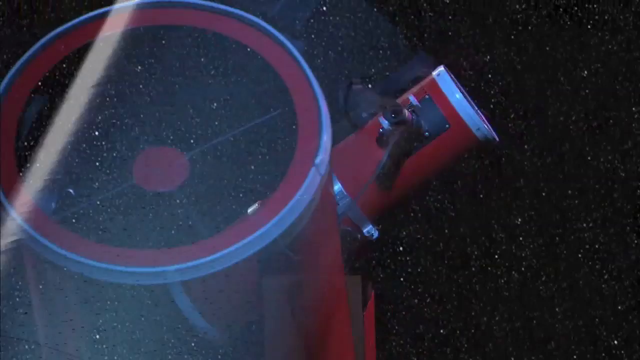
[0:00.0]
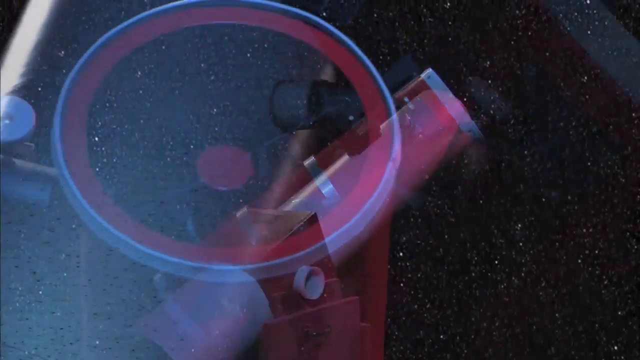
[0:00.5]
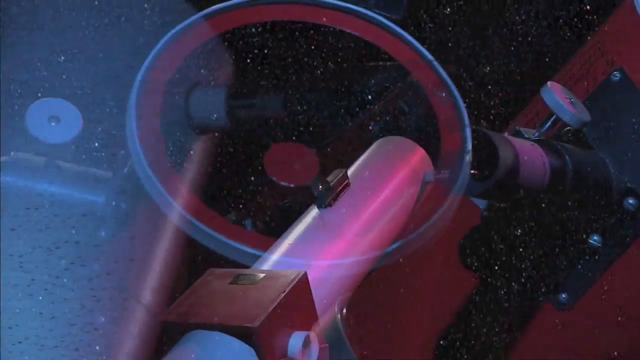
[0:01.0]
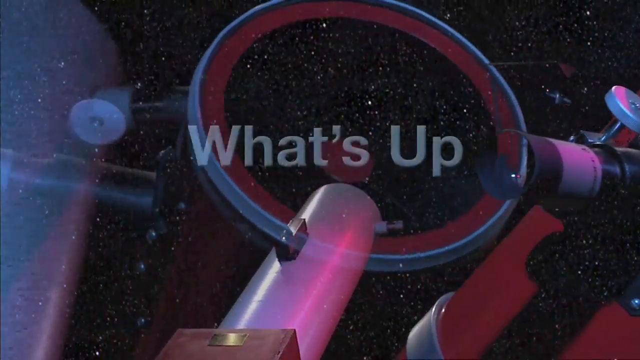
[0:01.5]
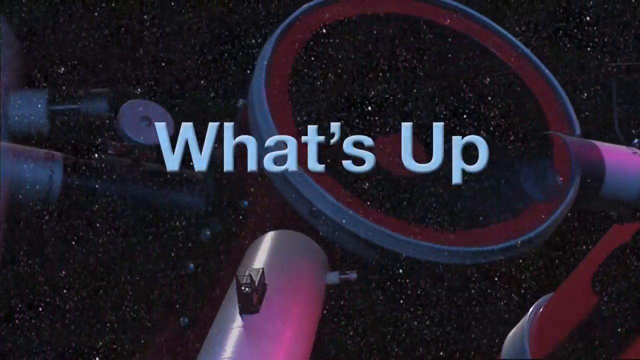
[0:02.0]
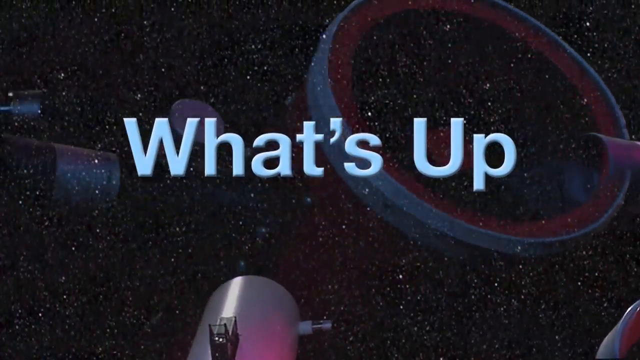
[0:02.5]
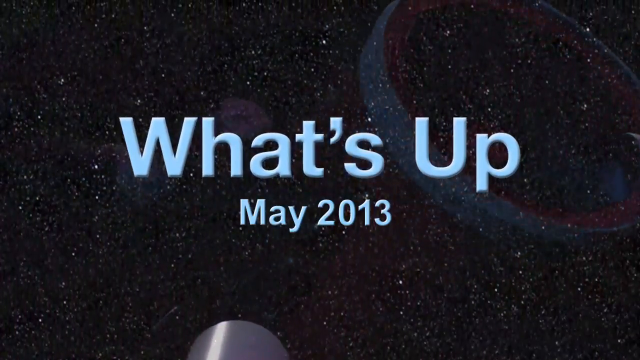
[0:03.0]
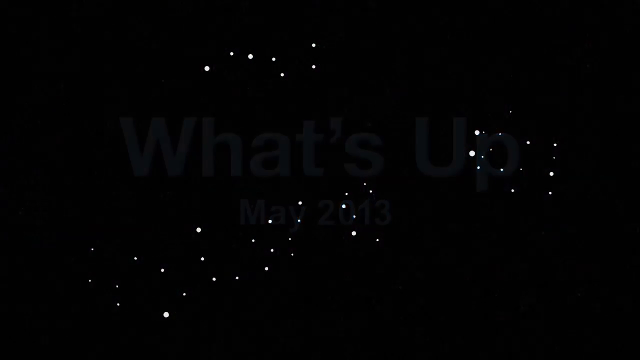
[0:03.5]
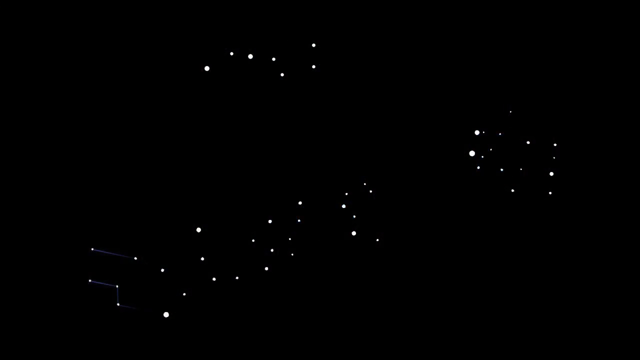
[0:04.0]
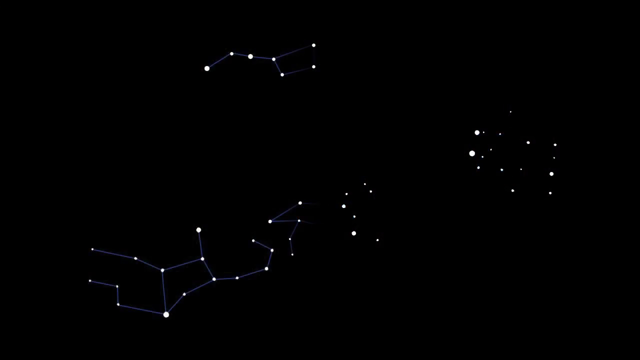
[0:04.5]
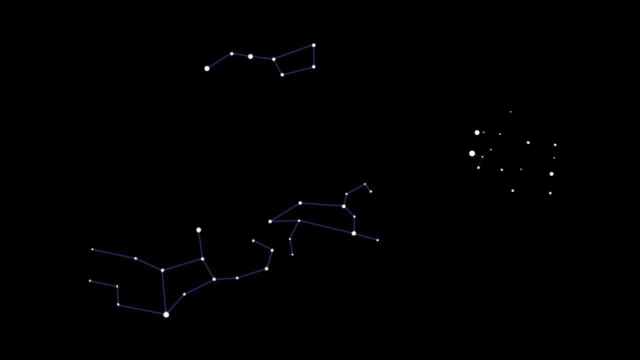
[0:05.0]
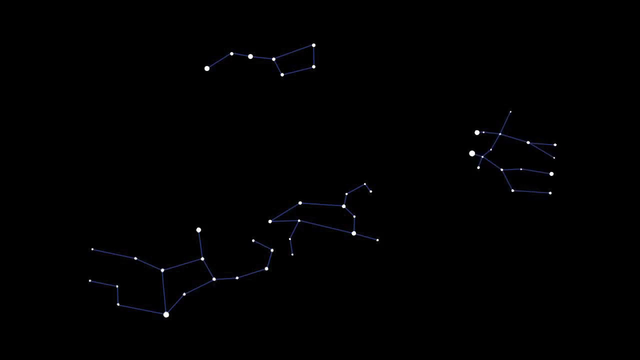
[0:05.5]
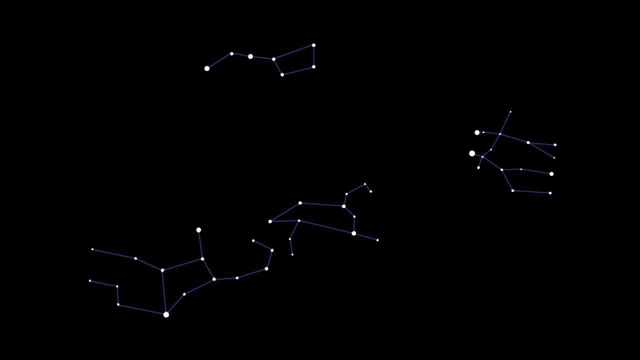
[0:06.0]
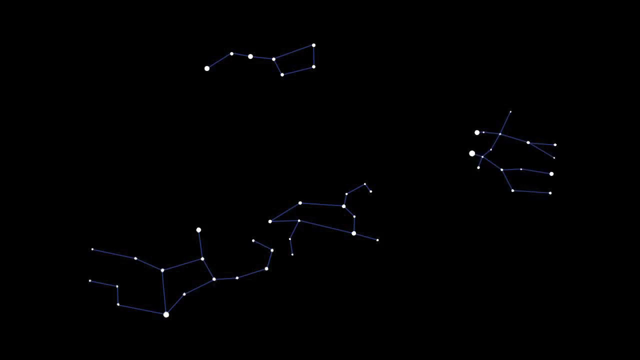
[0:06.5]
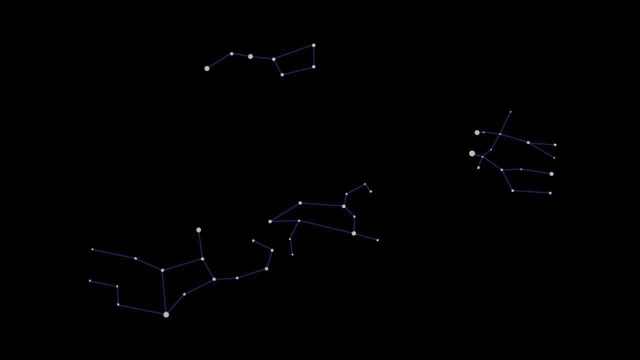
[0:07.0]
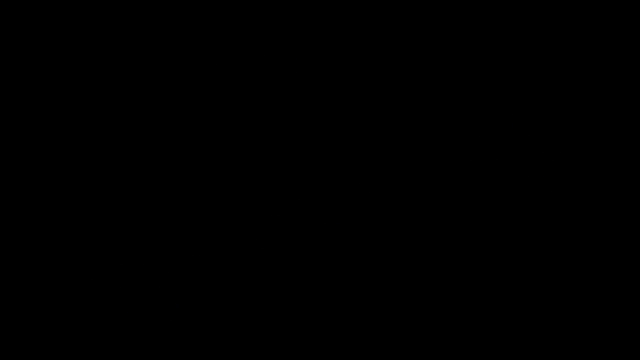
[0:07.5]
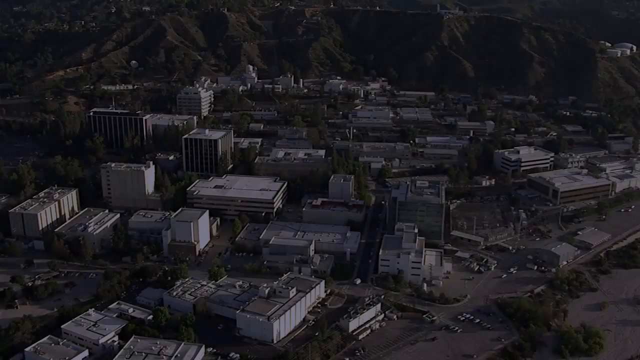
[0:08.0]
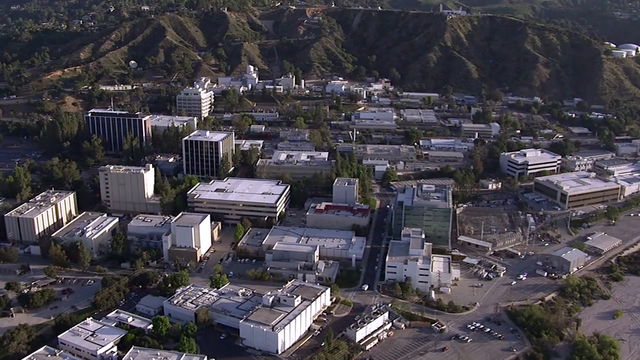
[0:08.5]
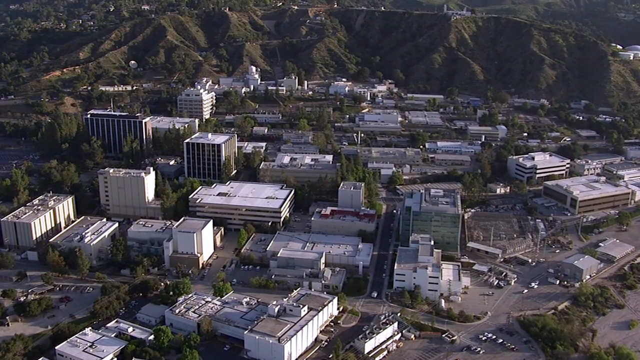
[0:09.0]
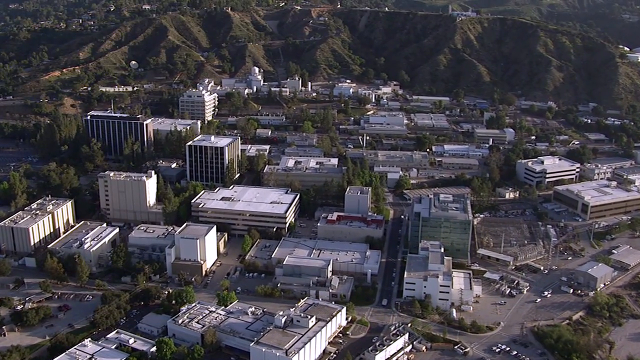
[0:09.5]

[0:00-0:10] The video opens on what looks like a telescope, red with silver trim, with what looks like a large star field behind it. Text appears in the middle of the screen reading "what's up. May 2013." The telescope and star field disappear, and an illustrated view of some constellations appears; one looks like the dipper, and another looks like two people holding hands. The scene then switches to what appears to be a group of buildings in a valley below some mountains or hills, with many trees among the buildings.